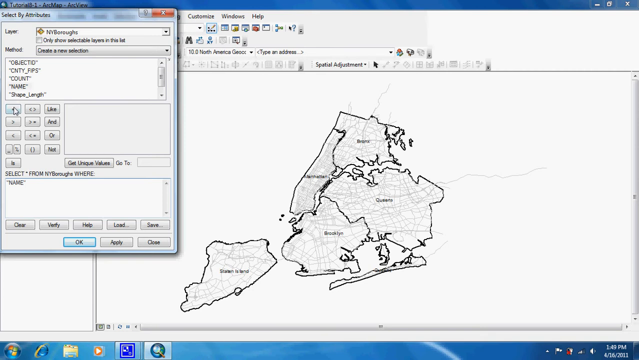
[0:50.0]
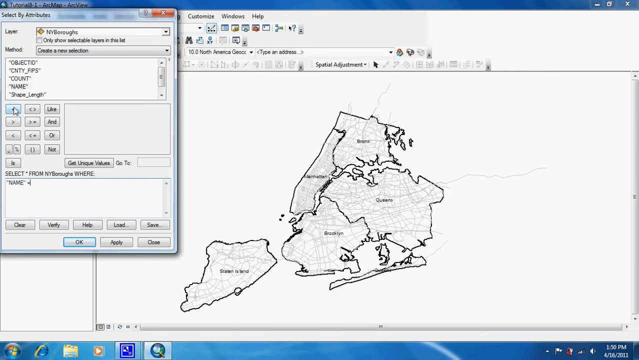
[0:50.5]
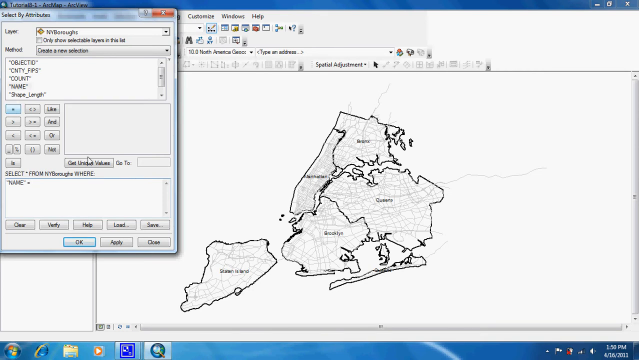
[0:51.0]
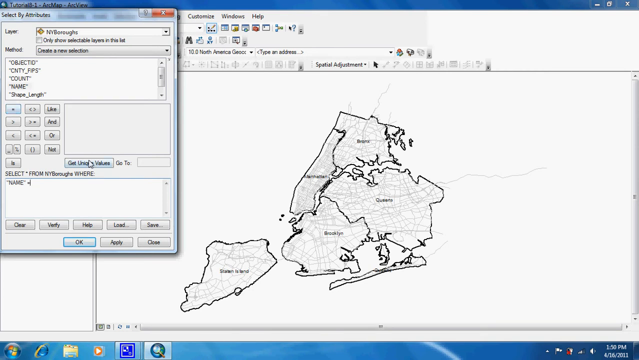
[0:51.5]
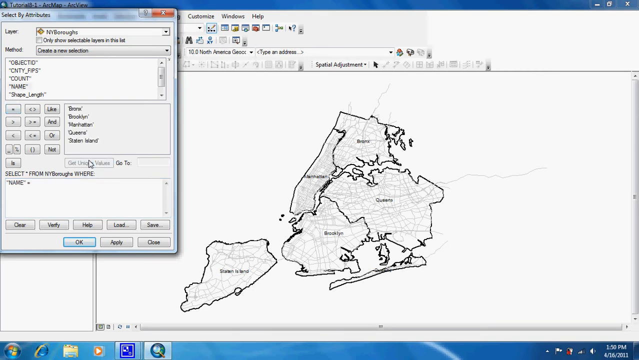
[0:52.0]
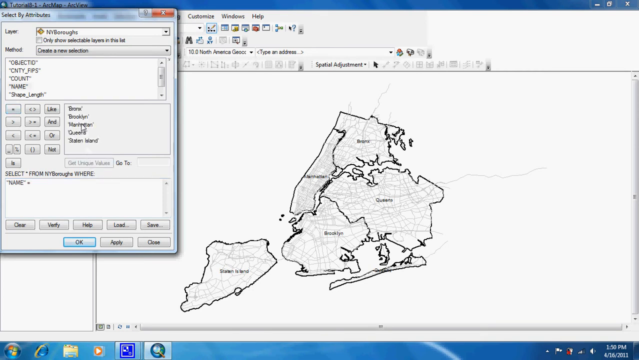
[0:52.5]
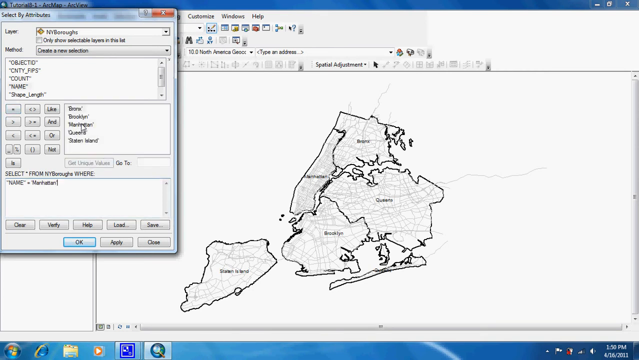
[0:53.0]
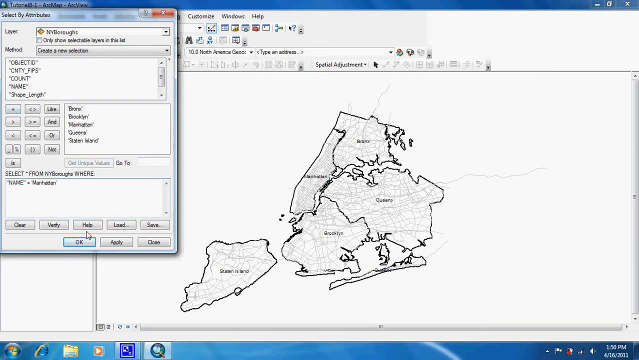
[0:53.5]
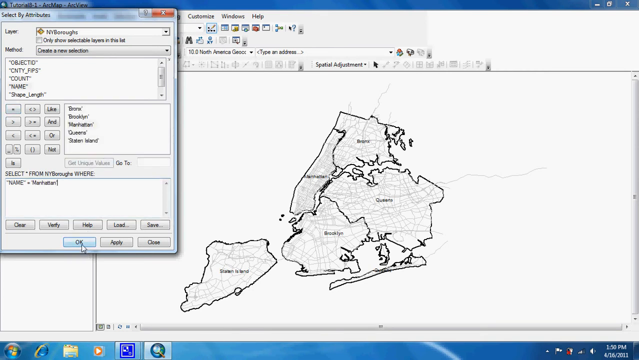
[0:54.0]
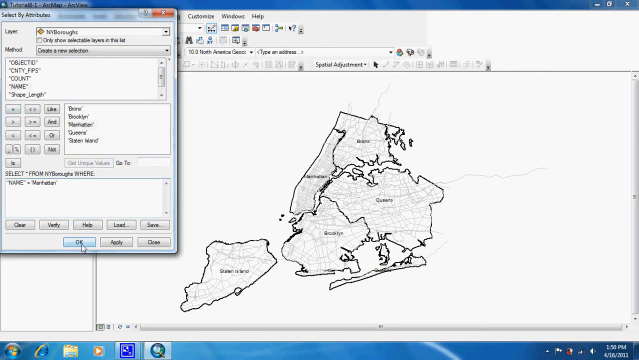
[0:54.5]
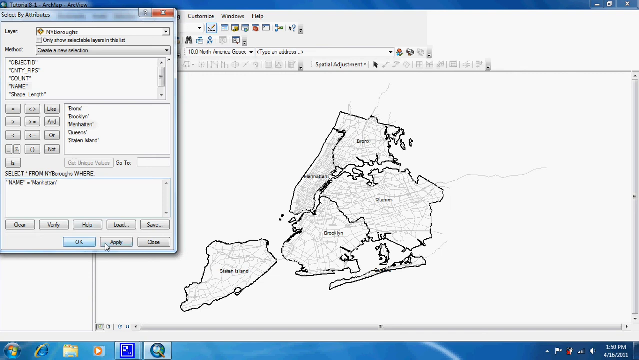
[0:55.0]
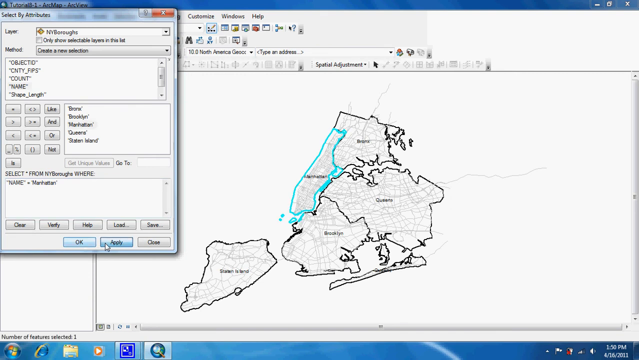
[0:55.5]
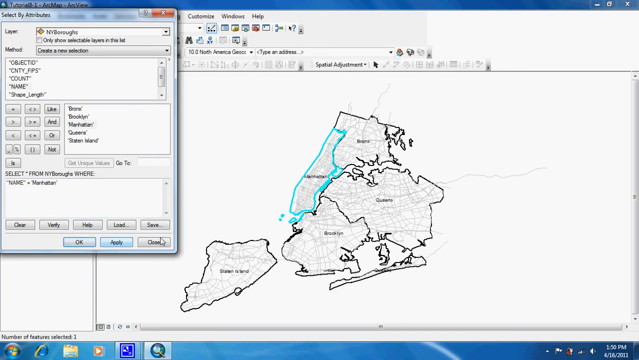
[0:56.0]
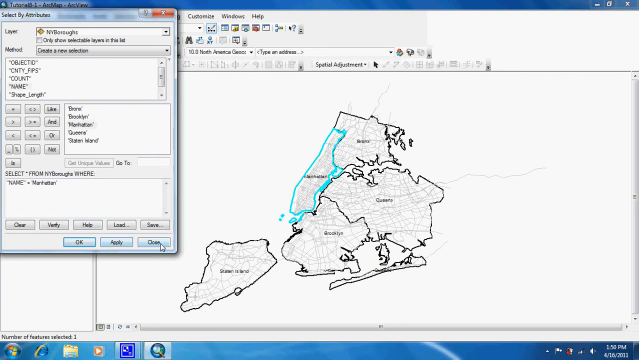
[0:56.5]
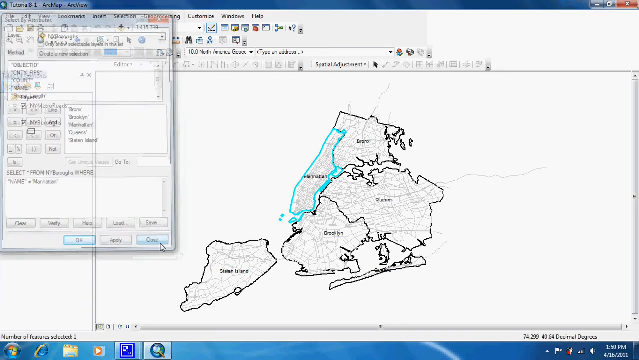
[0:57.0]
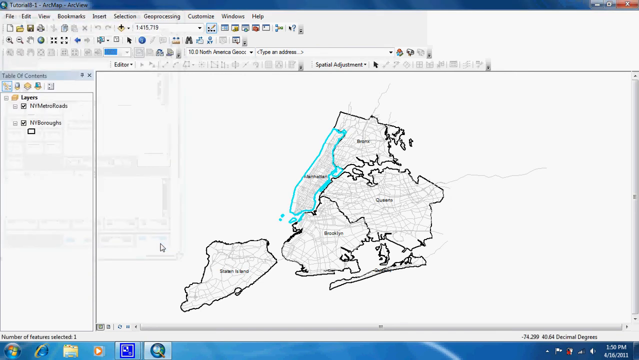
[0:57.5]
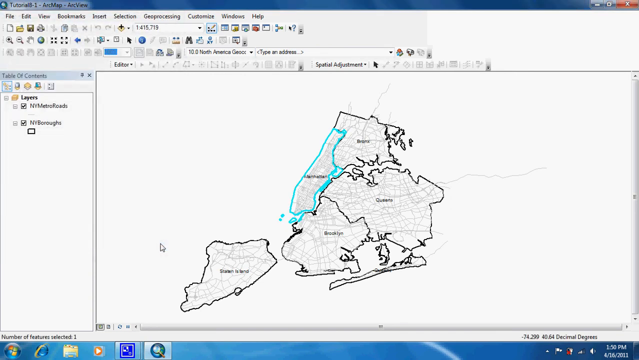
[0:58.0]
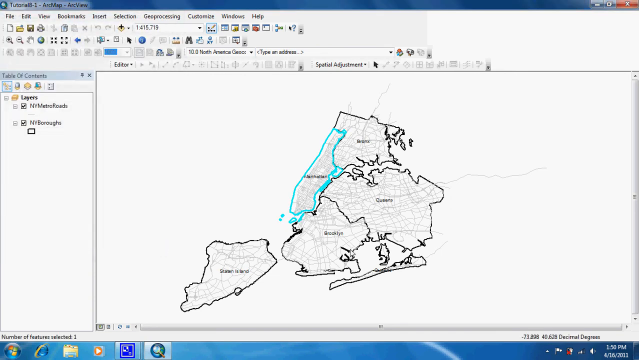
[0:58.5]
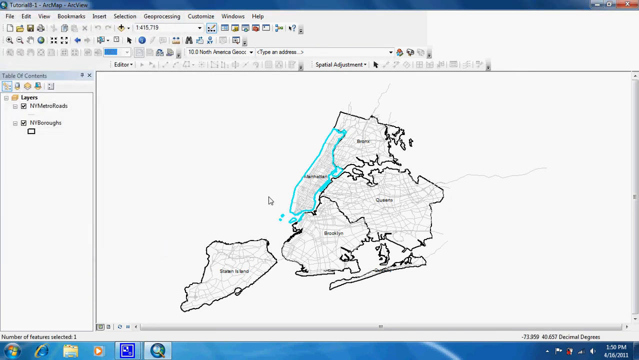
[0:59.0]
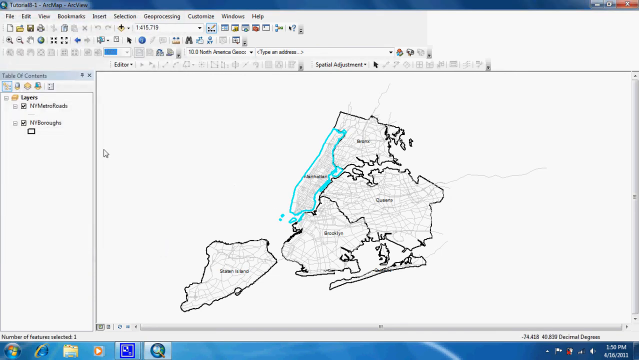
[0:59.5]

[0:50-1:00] The pop-up window remains on the left as different options are selected. "Select by attributes" is at the top, the layer New York boroughs is selected, and the method is "create a new selection". The different New York boroughs are listed in a field below. The pointer clicks close and the window disappears. On the map, one borough, possibly Manhattan, is now highlighted in a teal color. The mouse pointer then moves back over to the left.